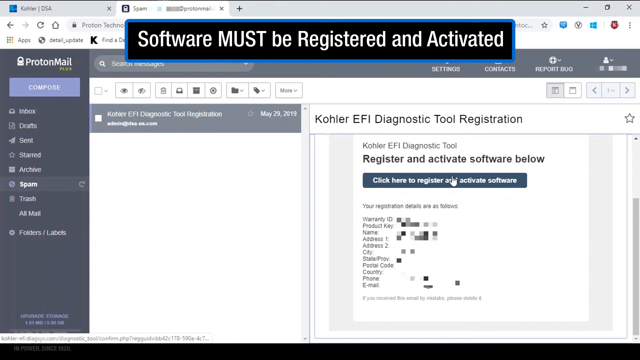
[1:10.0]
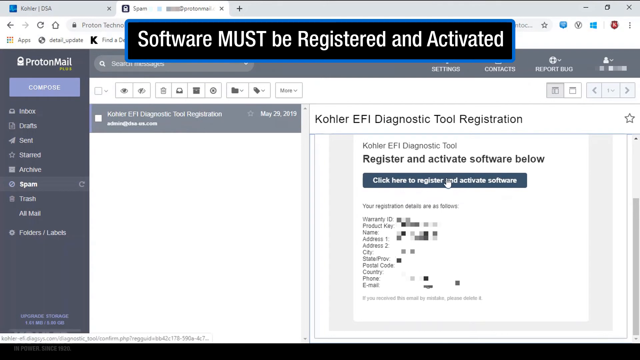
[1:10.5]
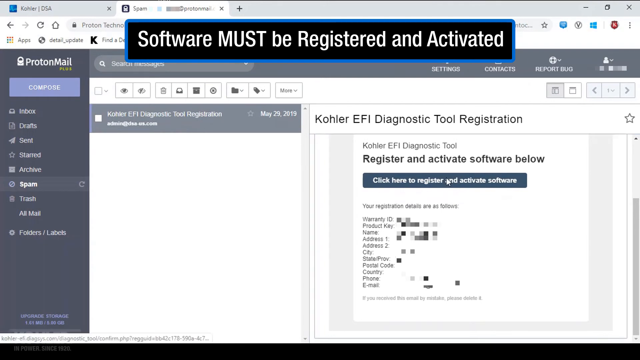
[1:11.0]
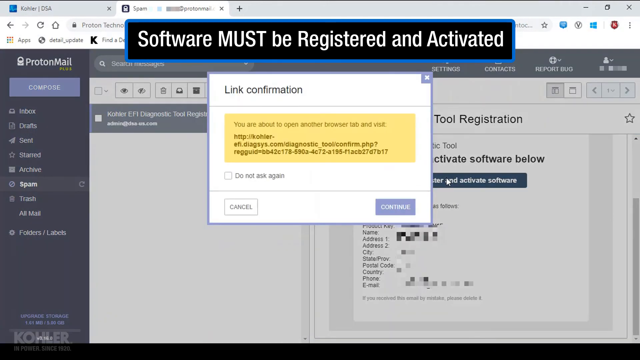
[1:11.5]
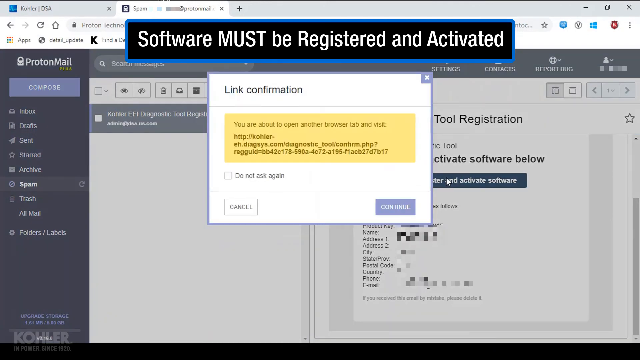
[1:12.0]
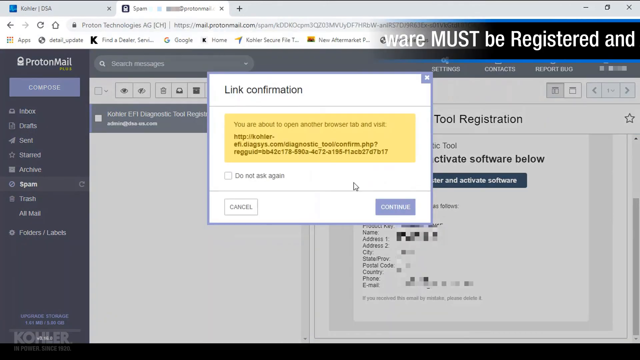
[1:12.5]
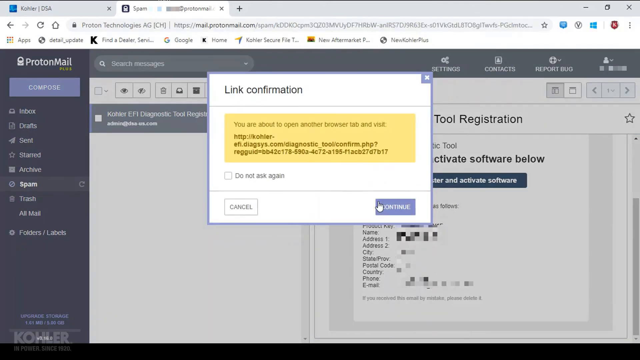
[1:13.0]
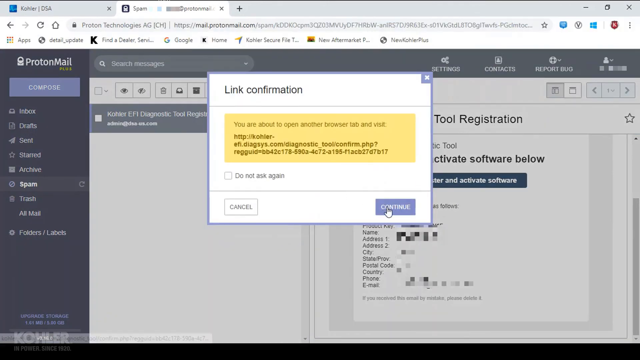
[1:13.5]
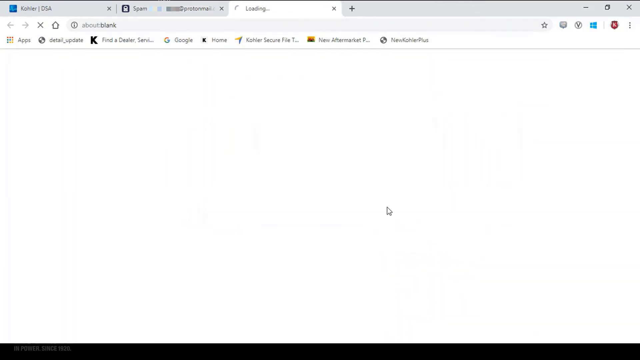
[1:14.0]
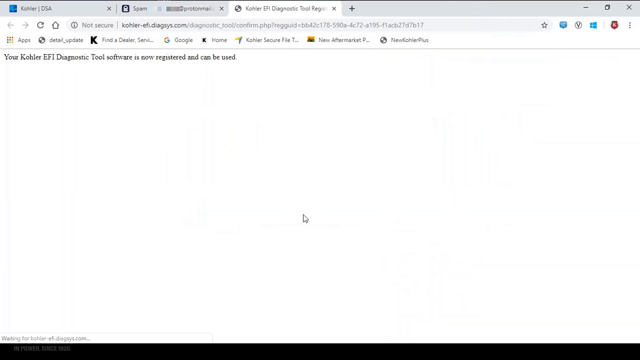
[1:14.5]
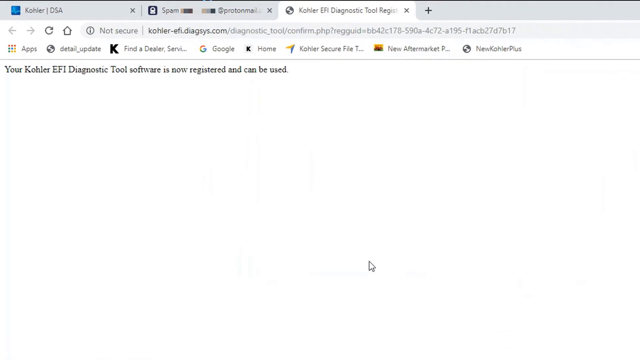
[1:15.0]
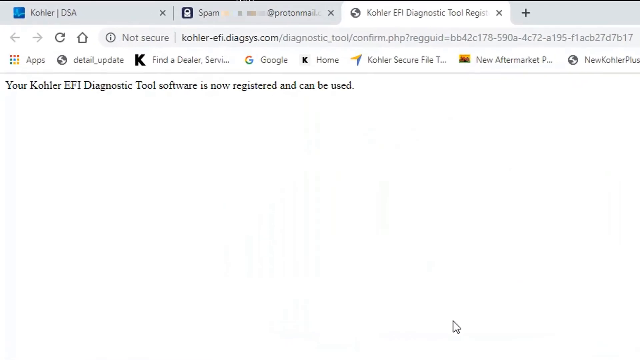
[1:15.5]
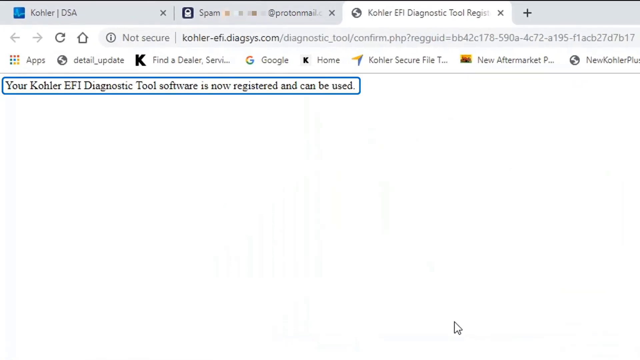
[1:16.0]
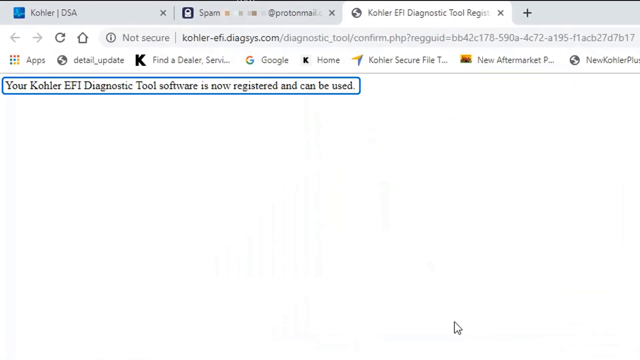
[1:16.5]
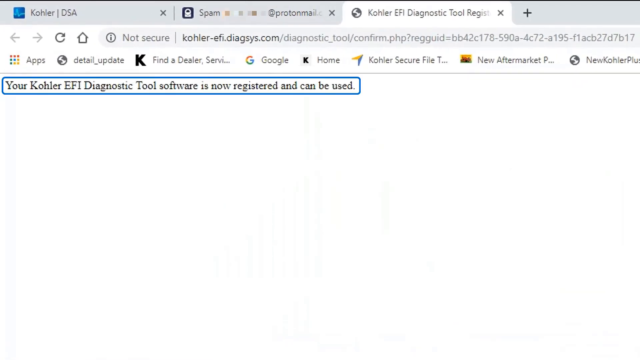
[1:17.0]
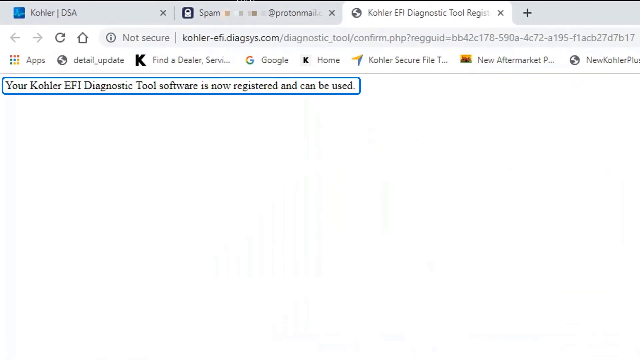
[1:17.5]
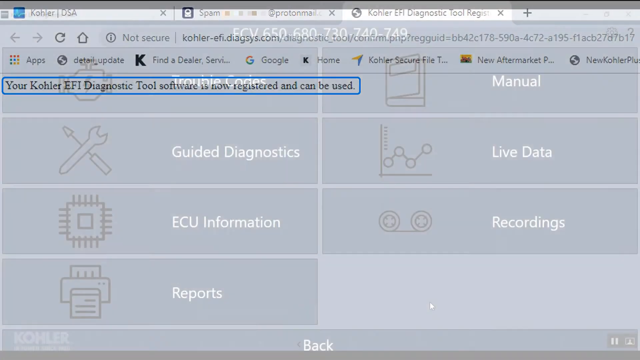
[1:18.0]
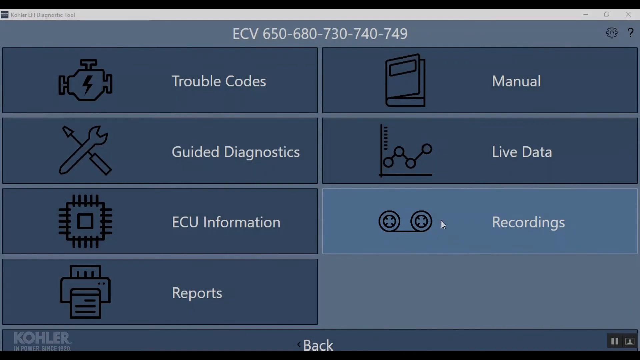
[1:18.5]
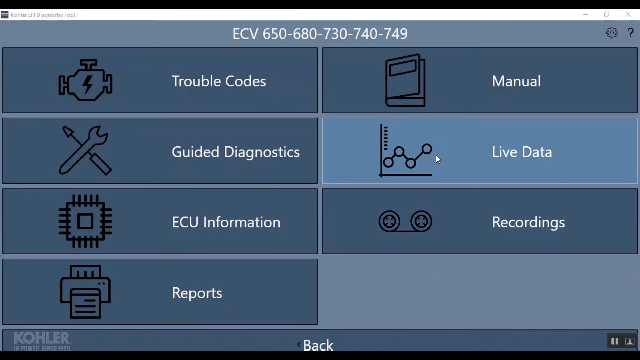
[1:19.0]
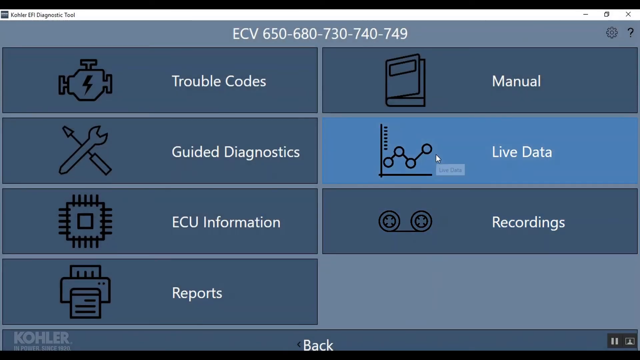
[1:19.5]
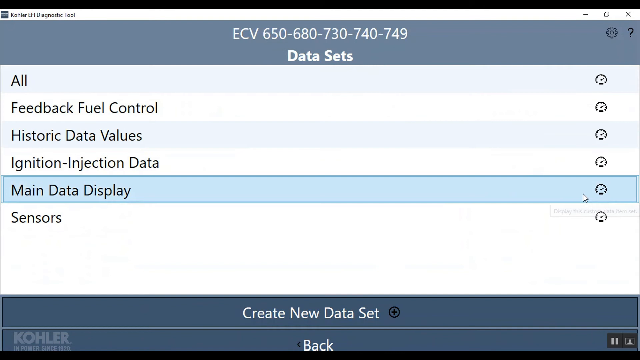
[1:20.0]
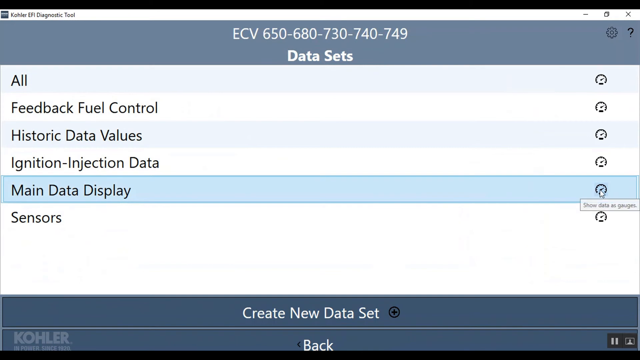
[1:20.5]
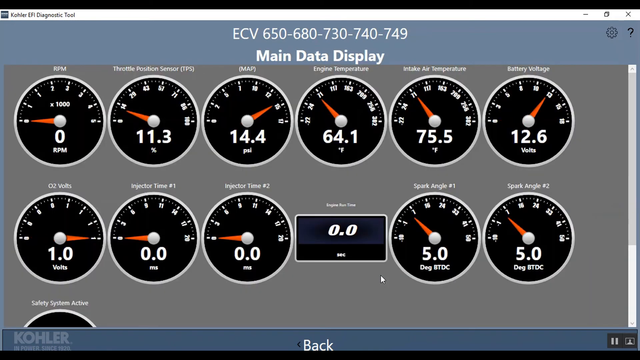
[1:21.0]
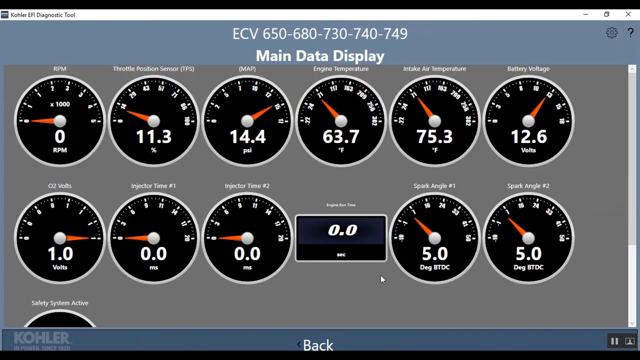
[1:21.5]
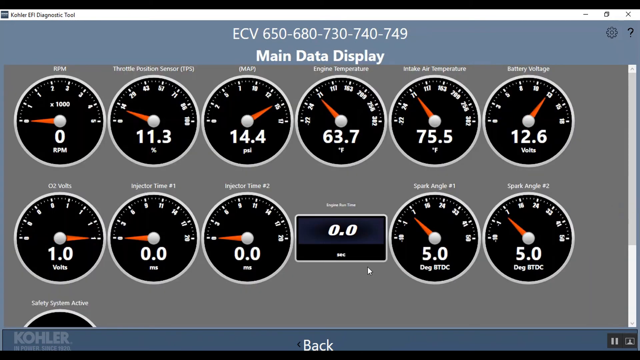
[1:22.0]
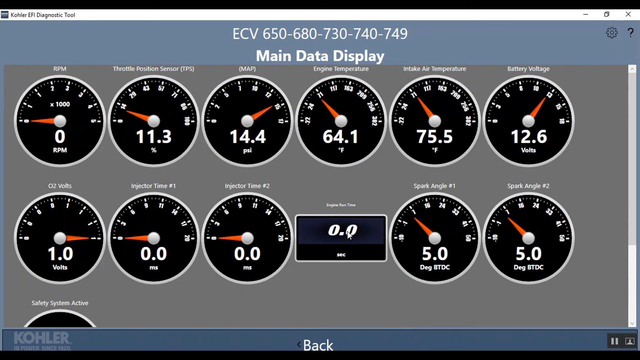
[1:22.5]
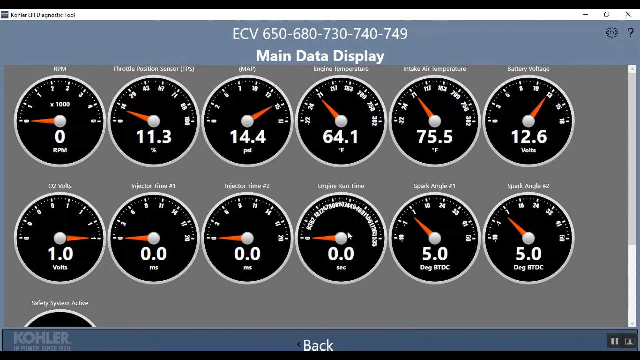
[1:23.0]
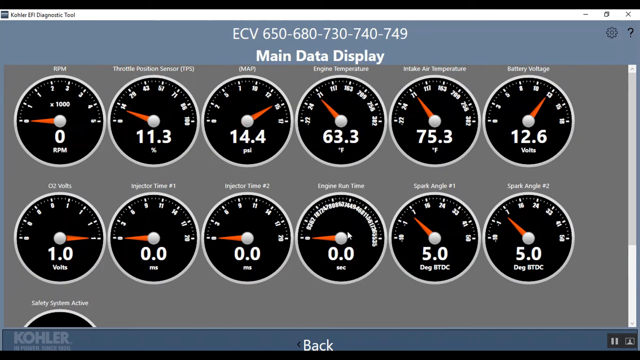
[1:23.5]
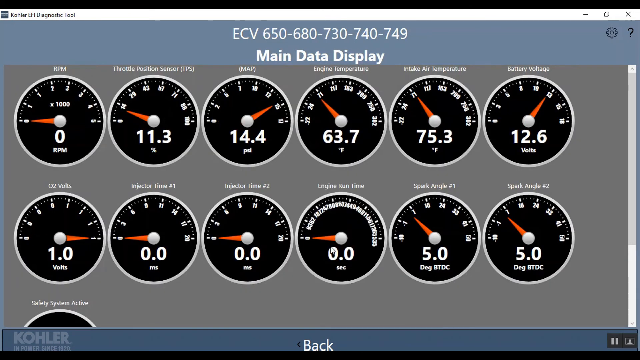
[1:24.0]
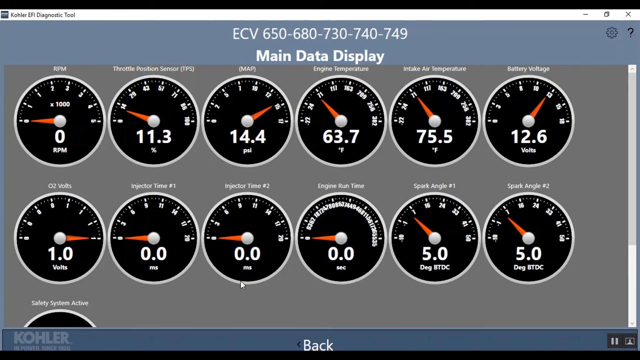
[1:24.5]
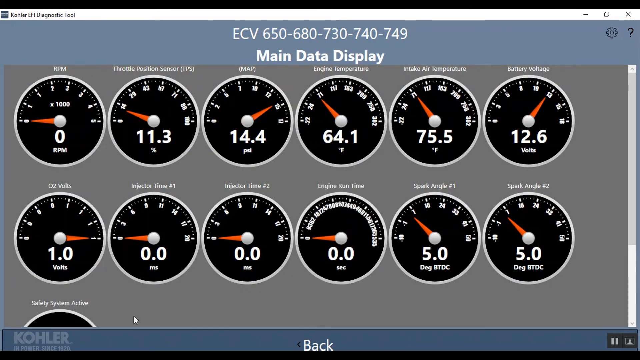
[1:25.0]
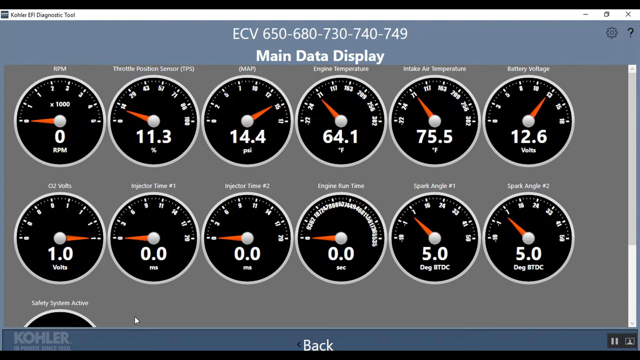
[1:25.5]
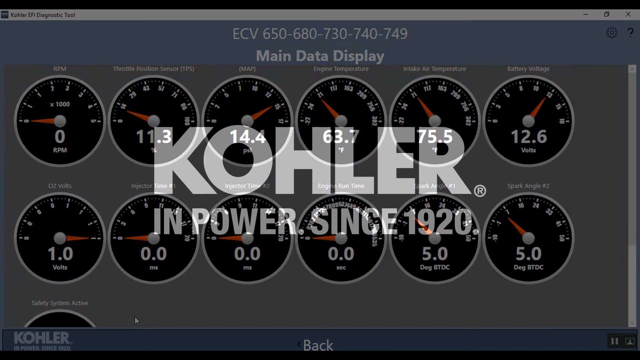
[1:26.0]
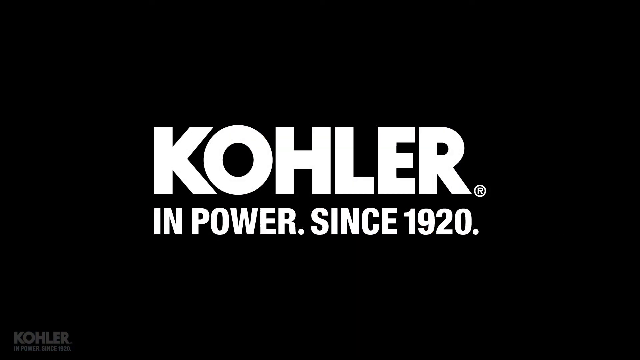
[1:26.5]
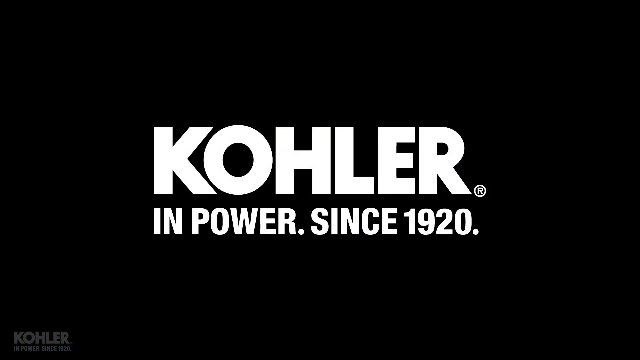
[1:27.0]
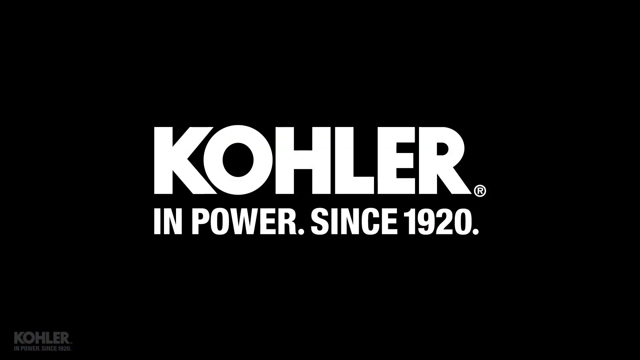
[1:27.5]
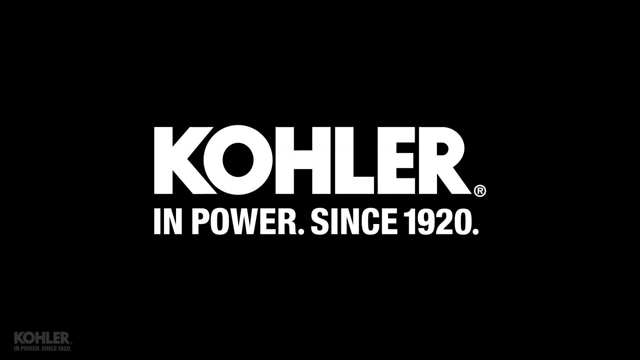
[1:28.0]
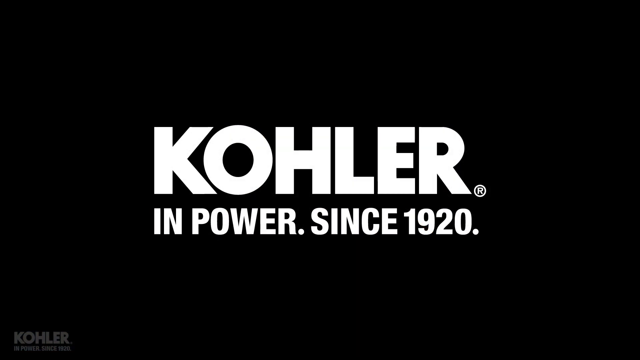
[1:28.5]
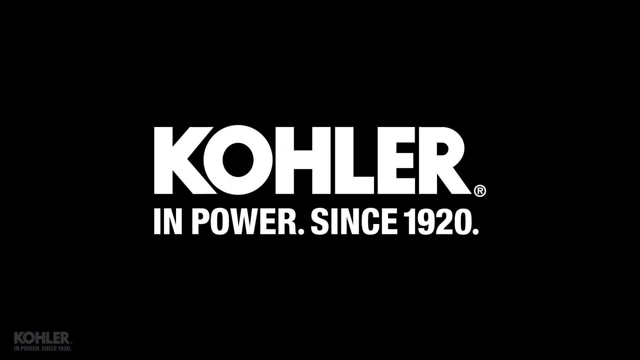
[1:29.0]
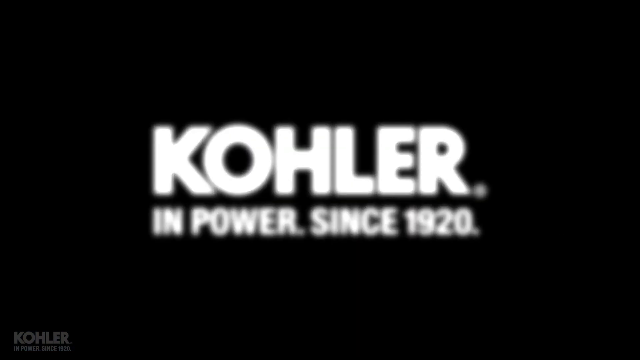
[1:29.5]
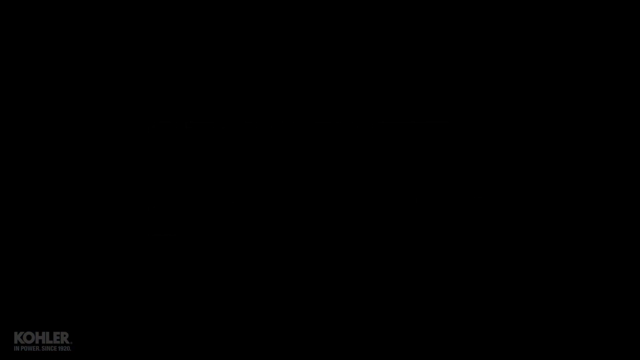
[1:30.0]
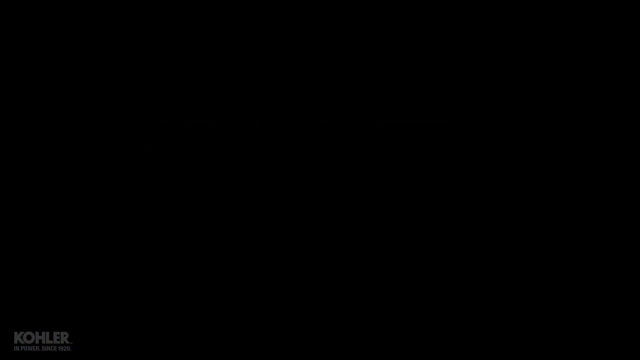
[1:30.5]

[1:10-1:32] In the last step, the activation link is clicked and an instruction appears saying you are about to open another browser tab; continue is selected. The KOHLER EFI diagnostic tool software is then opened and shows that it is now registered and can be used. Options include trouble codes, diagnostic, ECU information, manual, live data and recordings. Under live data there are feedback, fuel control, historic data values, initial injection data, main data display and sensors. The main data display appears on a dashboard with values that keep changing, such as 63.5 and 75. The video wraps up with "KOHLER in power since 1920", which looks more like an advert.